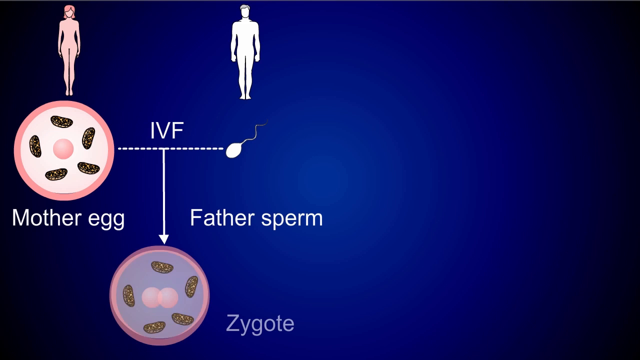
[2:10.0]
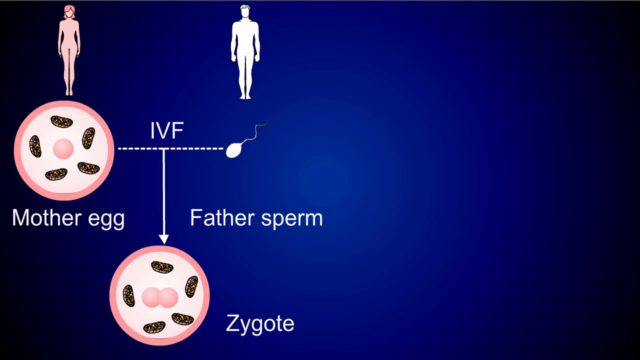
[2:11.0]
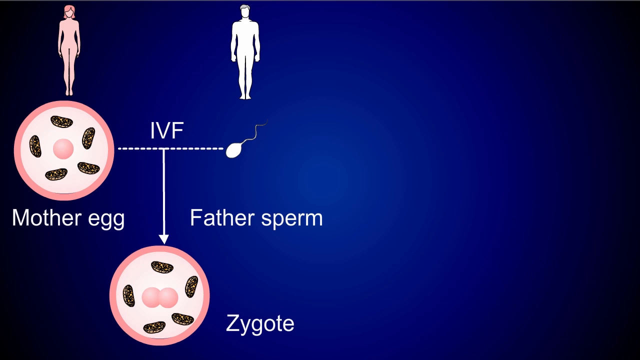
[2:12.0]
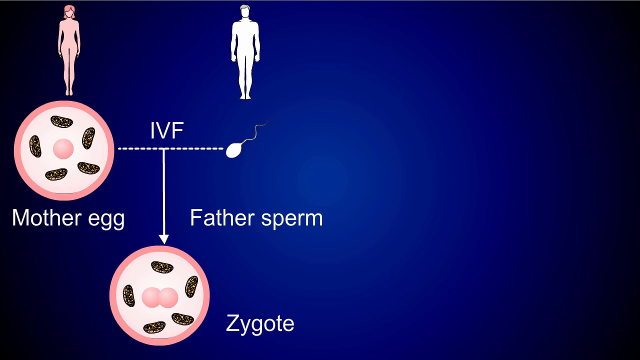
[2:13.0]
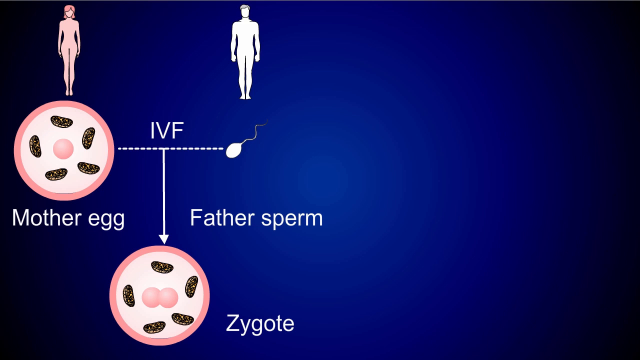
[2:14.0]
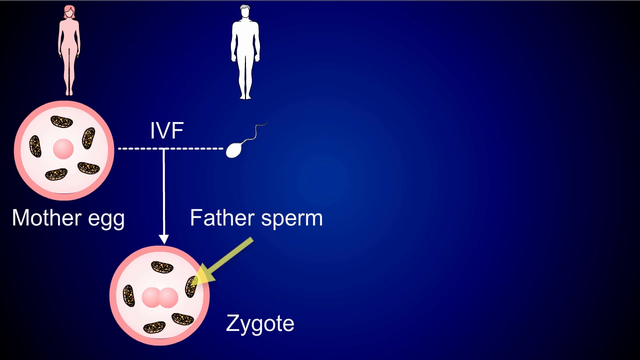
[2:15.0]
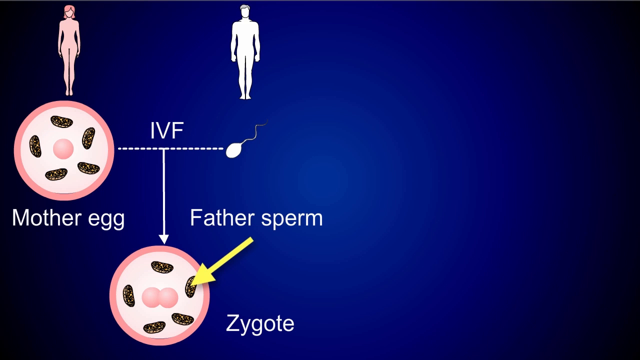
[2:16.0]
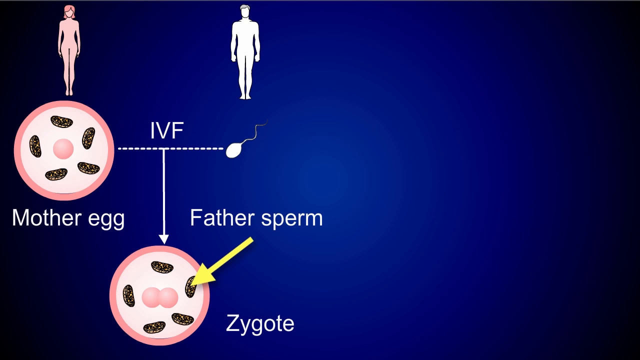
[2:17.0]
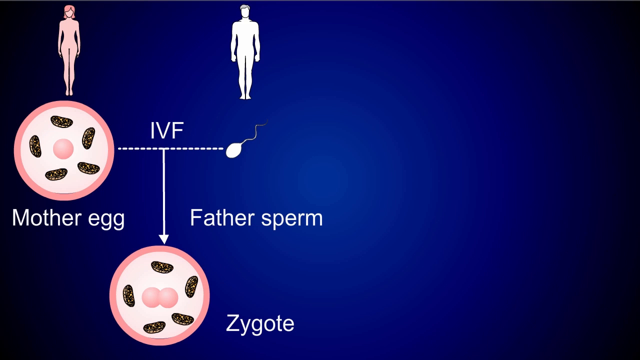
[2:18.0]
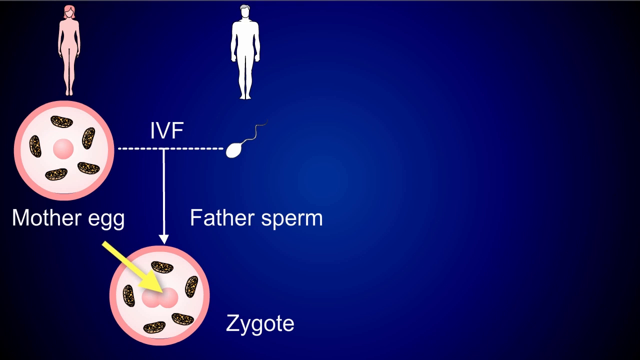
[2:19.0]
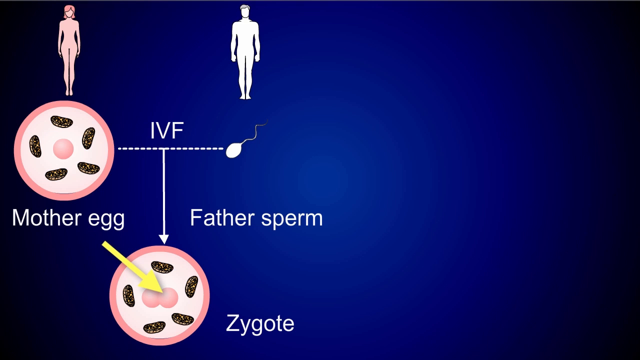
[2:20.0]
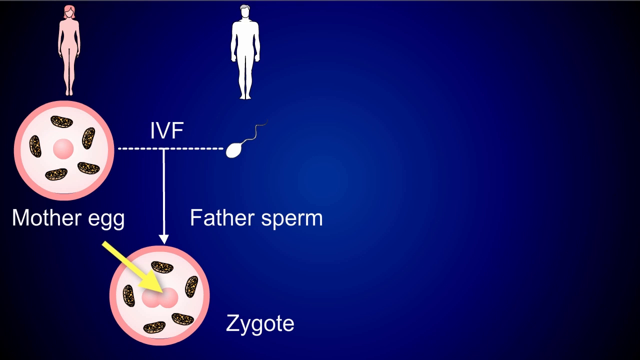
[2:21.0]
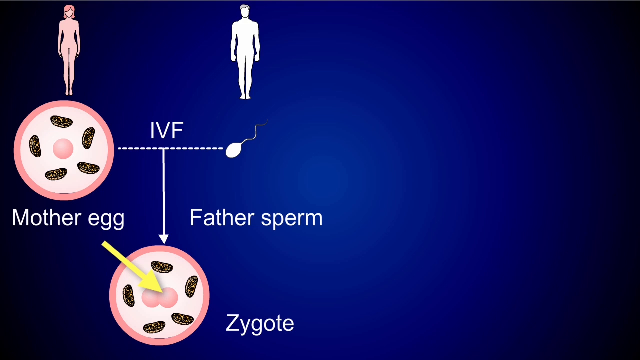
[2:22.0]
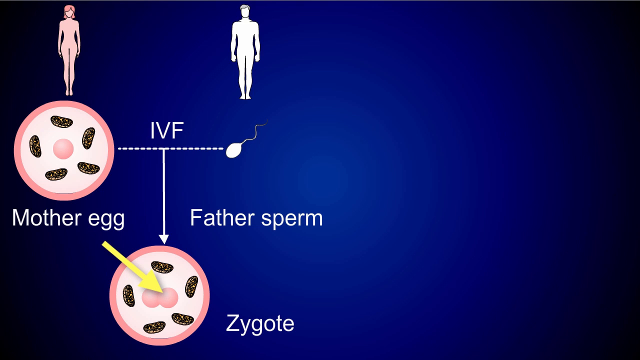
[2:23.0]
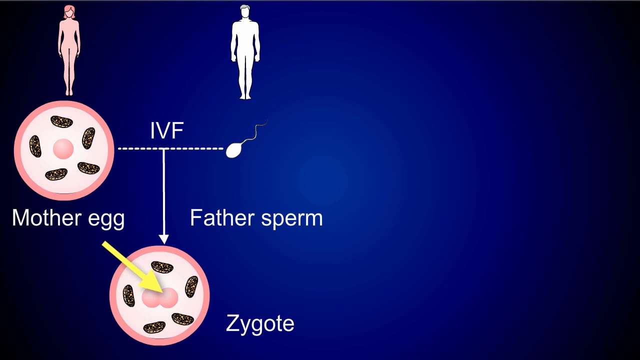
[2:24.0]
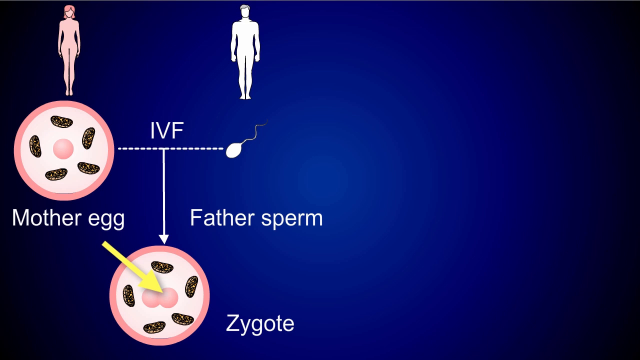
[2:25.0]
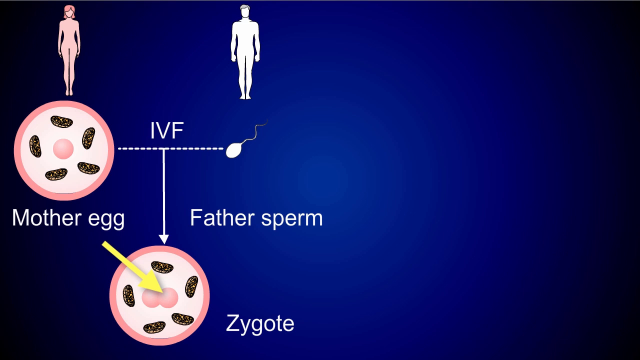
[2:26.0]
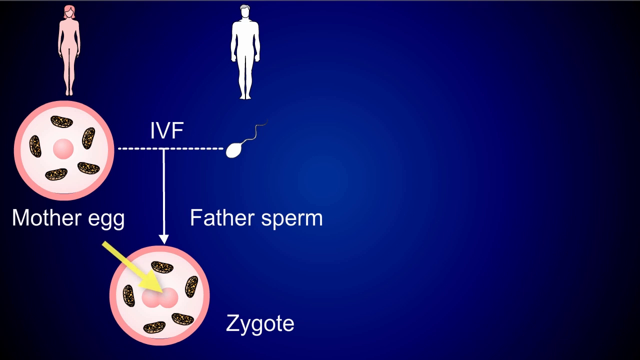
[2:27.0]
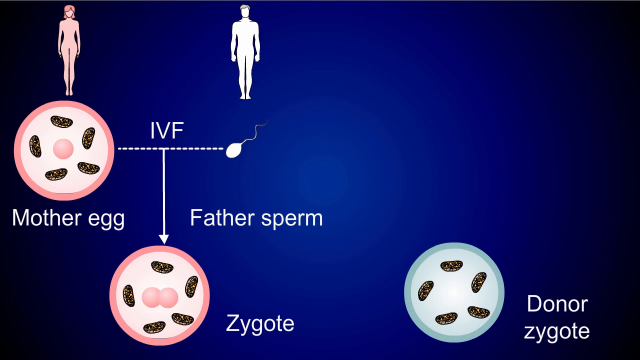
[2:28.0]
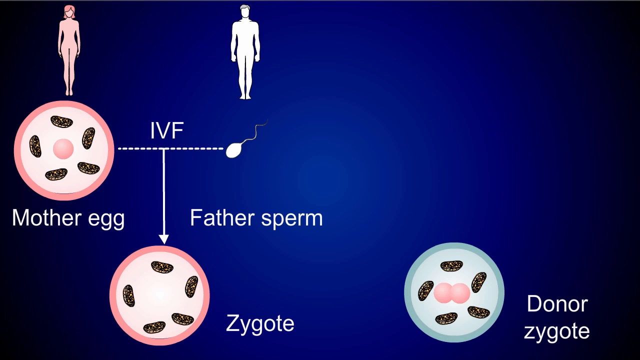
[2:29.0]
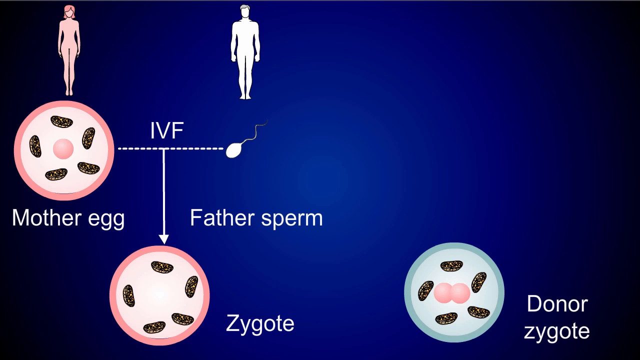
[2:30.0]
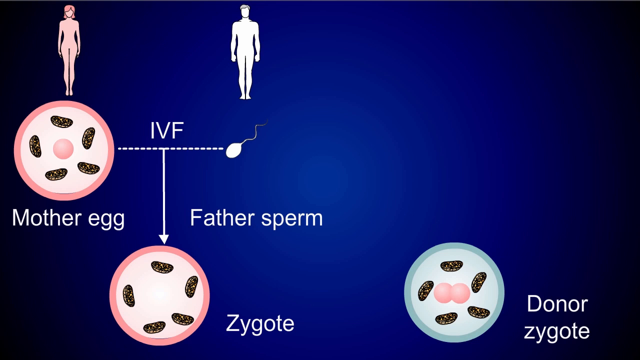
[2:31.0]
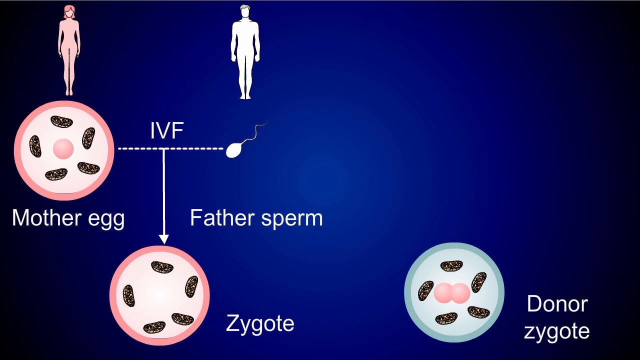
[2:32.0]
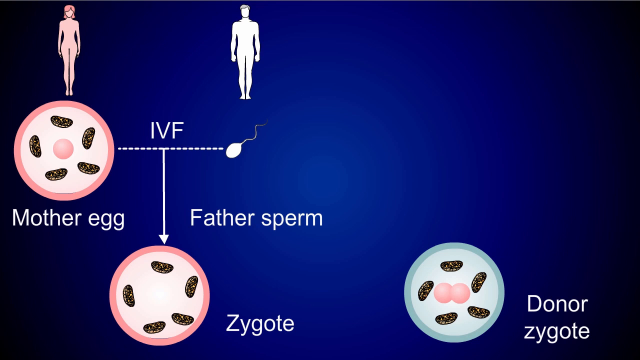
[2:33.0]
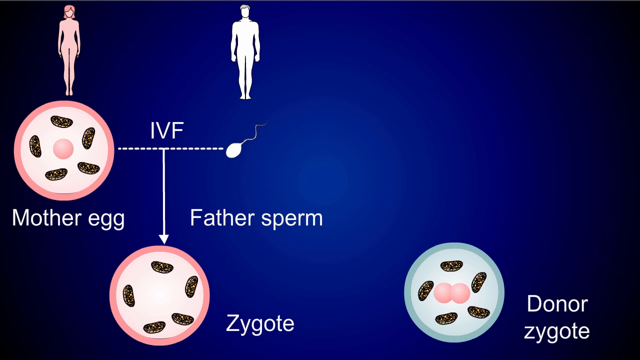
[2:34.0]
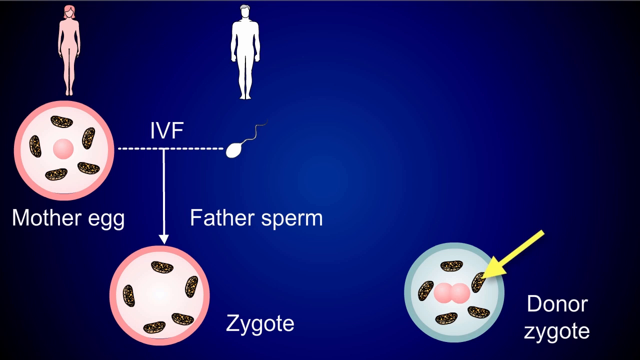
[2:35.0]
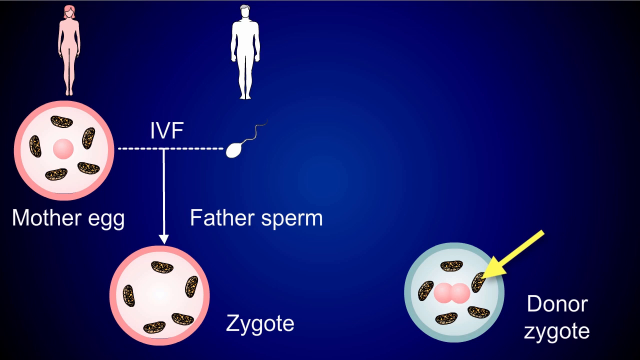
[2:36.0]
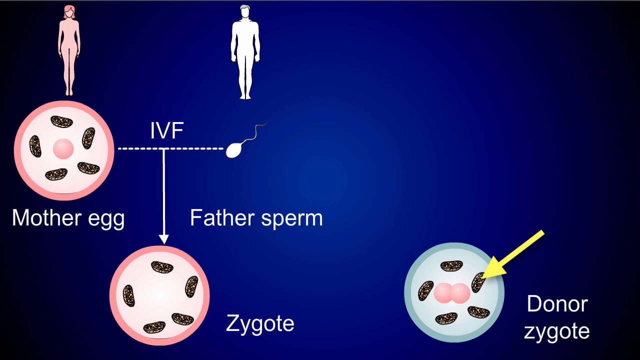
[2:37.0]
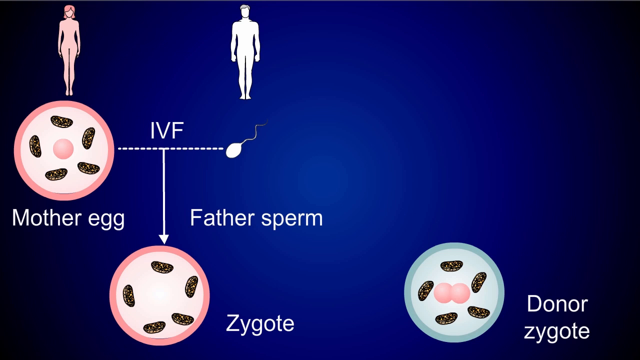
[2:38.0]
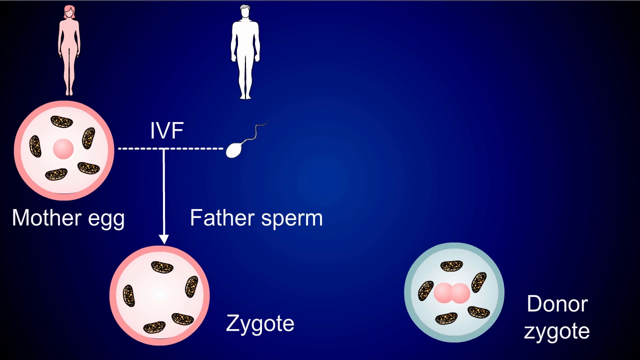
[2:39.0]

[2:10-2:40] A mother egg is on the left and the father sperm on the right in an in vitro fertilization diagram, connected by a dotted line. A long solid arrow goes down to the zygote, where the egg is splitting into two, and the father sperm is shown. The mother egg is pointed to, showing that both are inside the pink circle, and the mitochondria are visible as well. The diagram then moves over to a depiction of a donor egg labeled "donor zygote": a blue circle with mitochondria inside, and a yellow arrow pops up. Two of the splitting zygote cells have moved over, so the pink has moved into the blue circle.